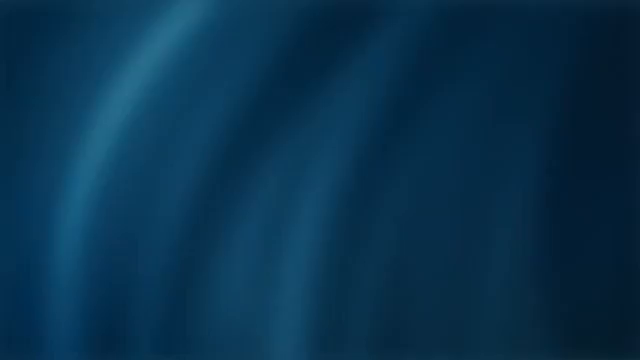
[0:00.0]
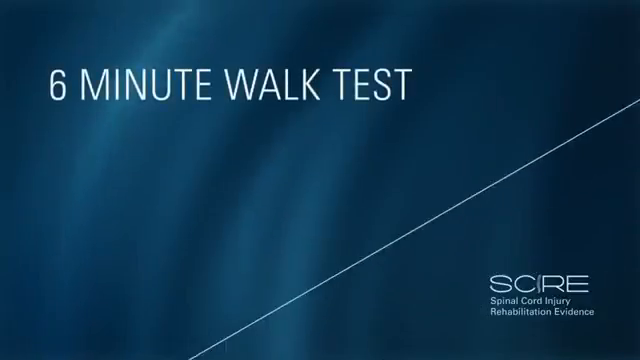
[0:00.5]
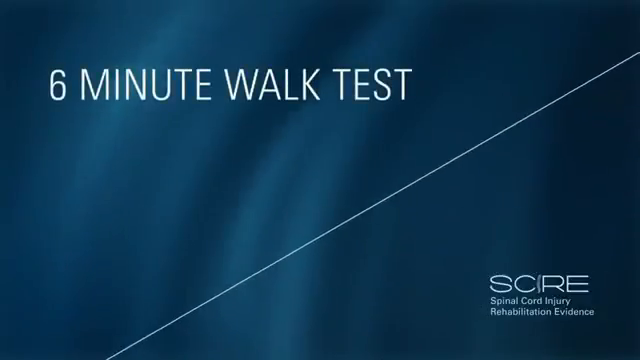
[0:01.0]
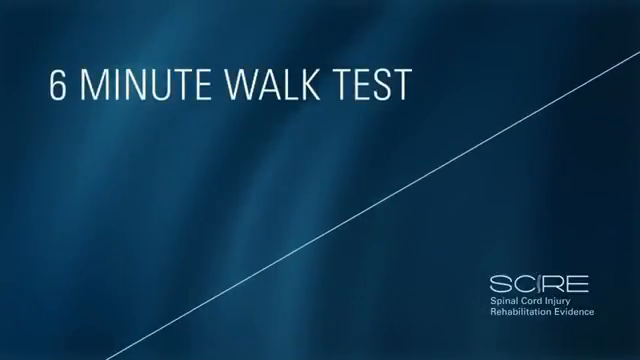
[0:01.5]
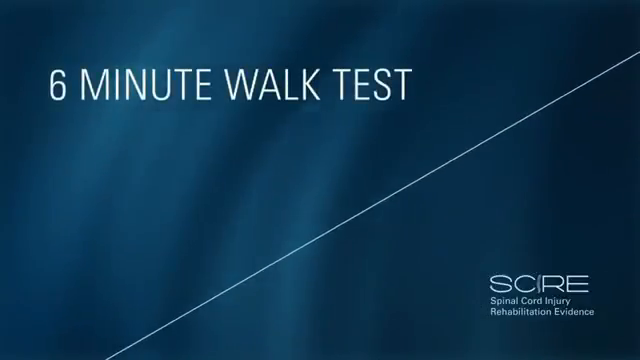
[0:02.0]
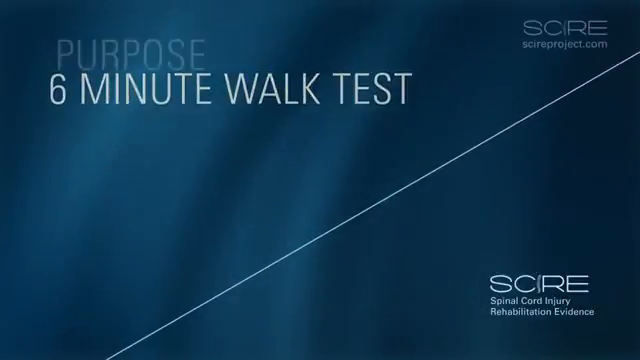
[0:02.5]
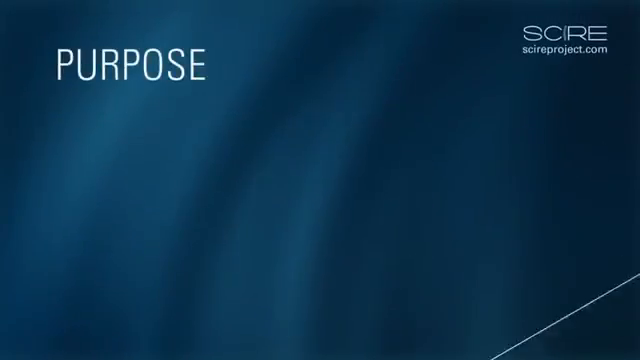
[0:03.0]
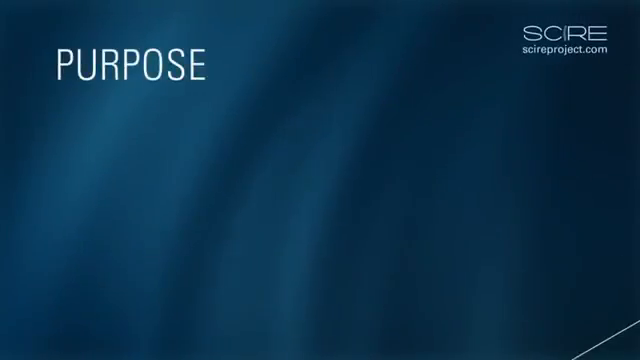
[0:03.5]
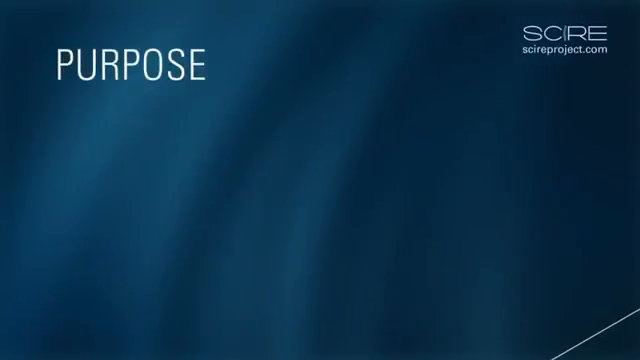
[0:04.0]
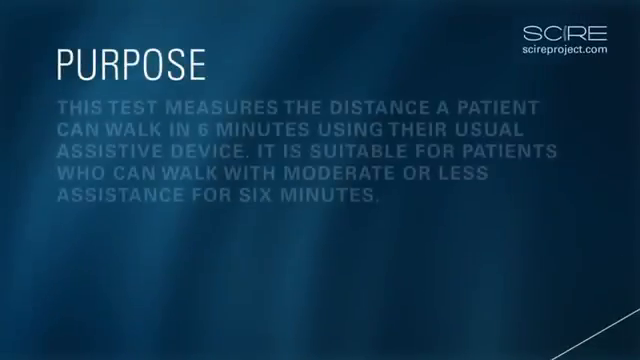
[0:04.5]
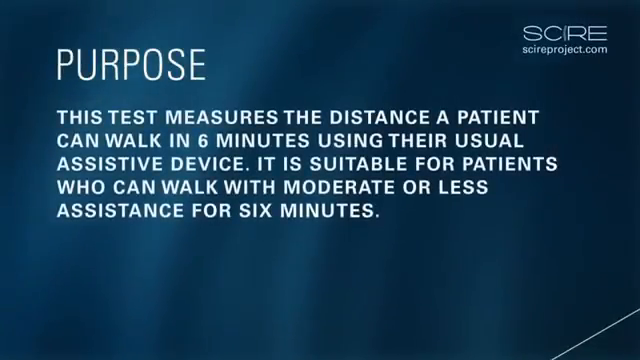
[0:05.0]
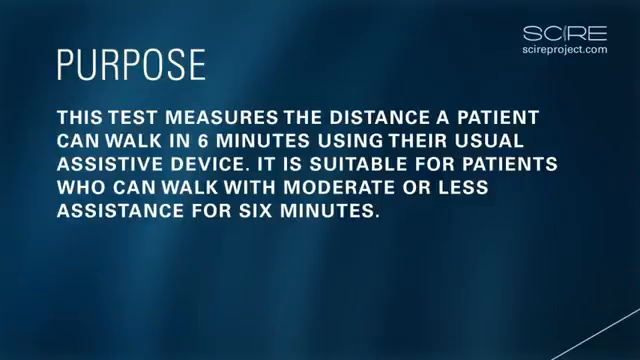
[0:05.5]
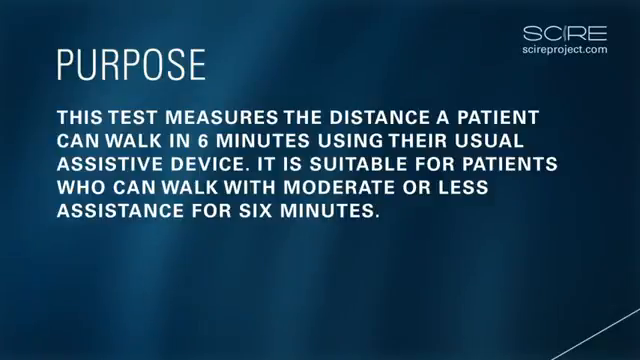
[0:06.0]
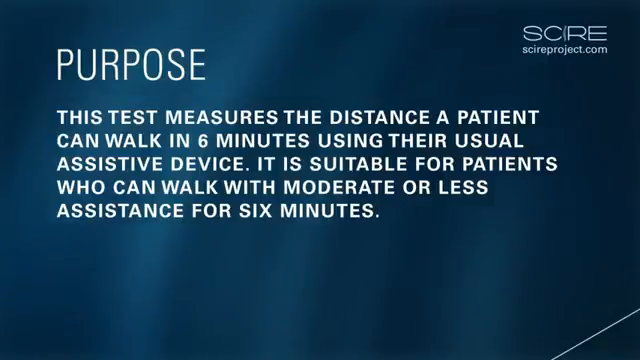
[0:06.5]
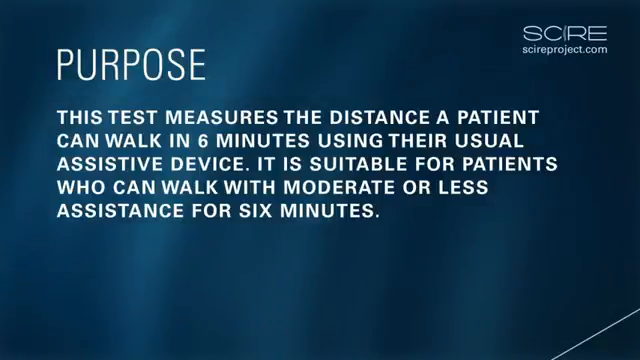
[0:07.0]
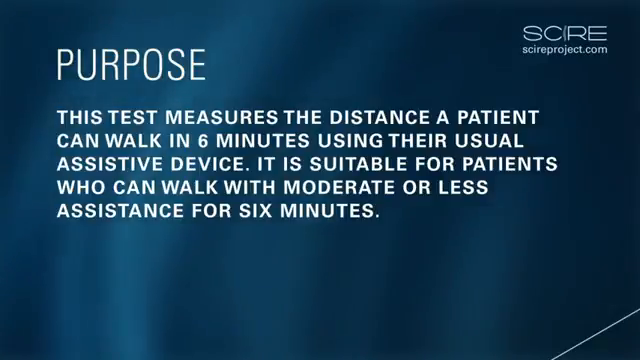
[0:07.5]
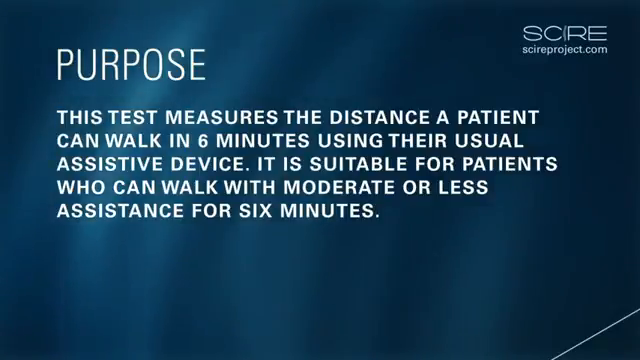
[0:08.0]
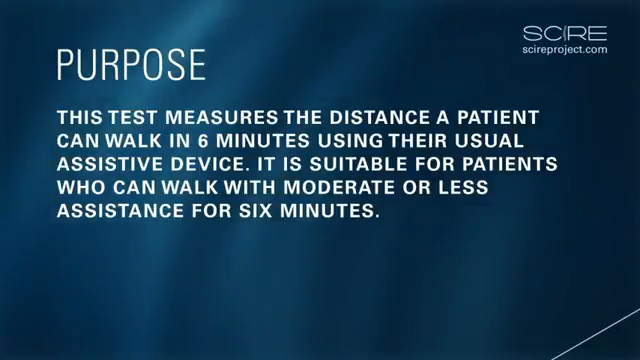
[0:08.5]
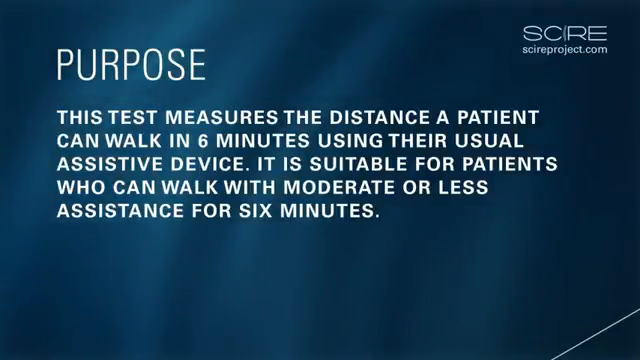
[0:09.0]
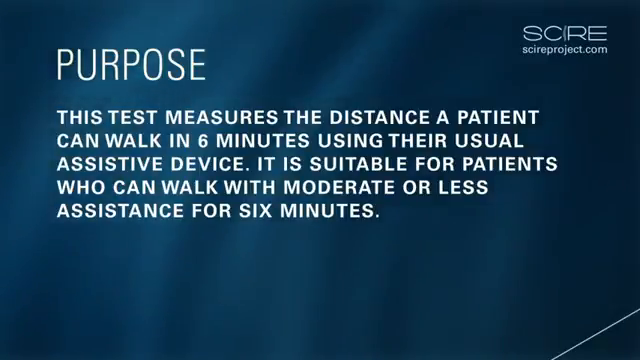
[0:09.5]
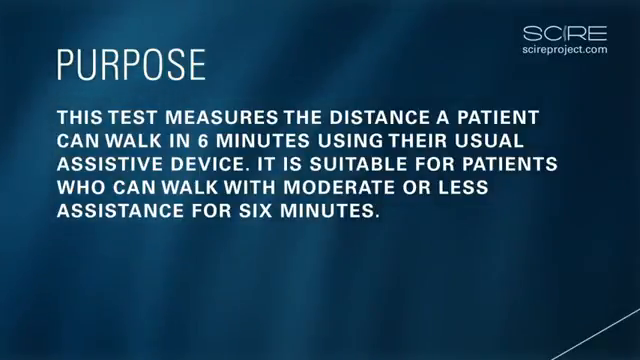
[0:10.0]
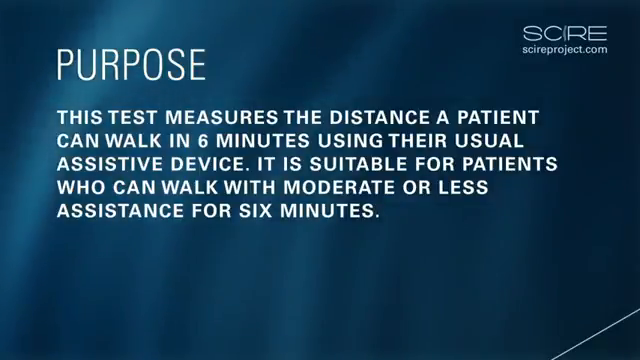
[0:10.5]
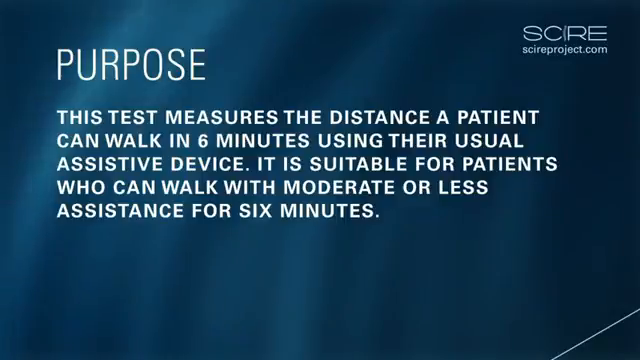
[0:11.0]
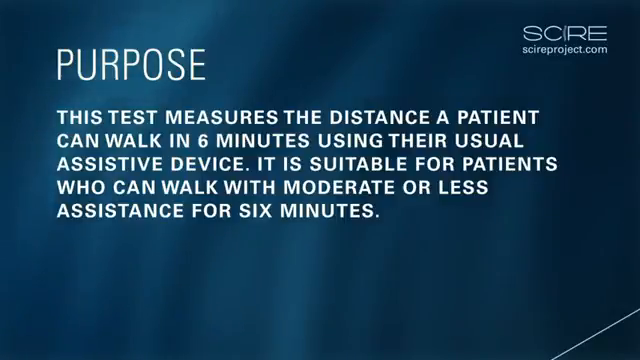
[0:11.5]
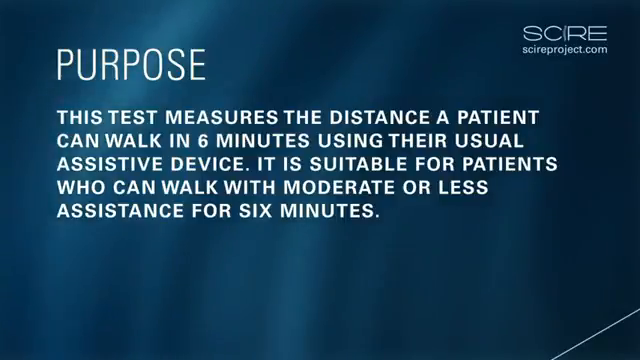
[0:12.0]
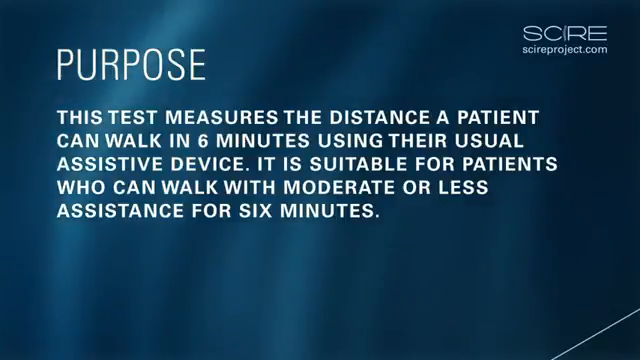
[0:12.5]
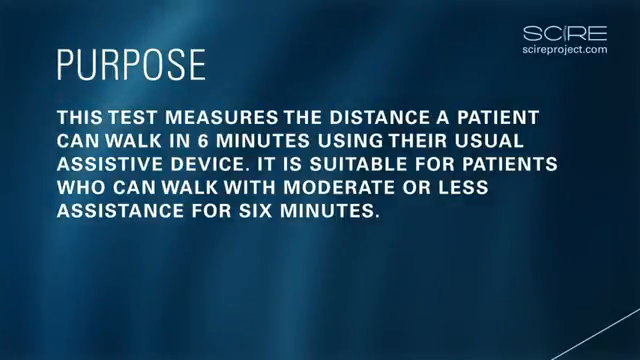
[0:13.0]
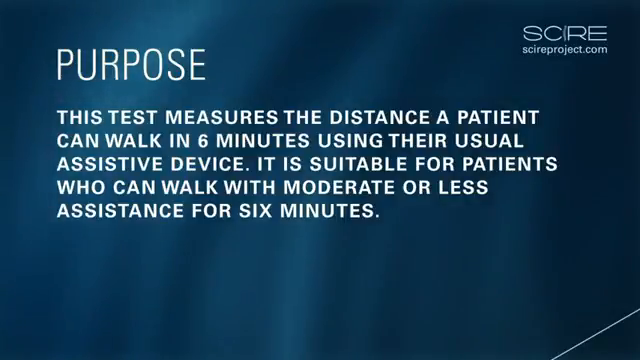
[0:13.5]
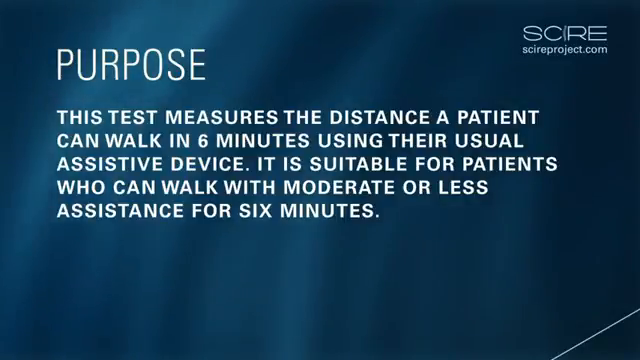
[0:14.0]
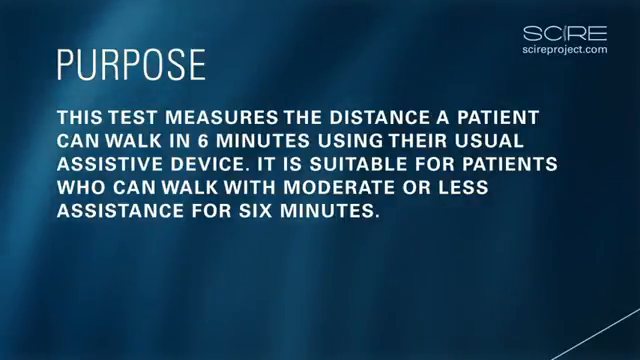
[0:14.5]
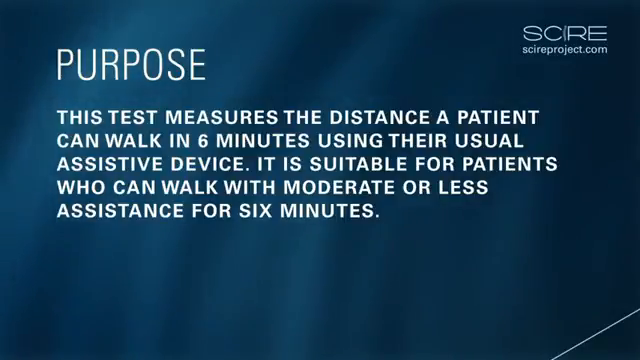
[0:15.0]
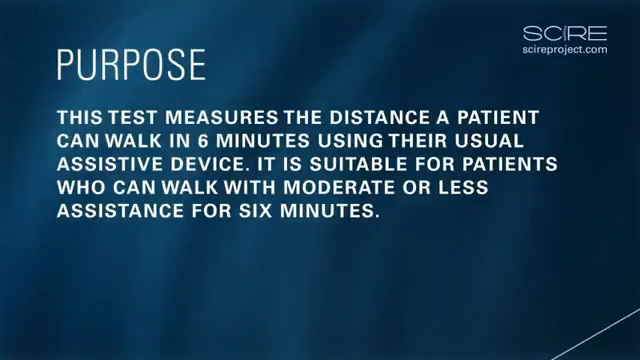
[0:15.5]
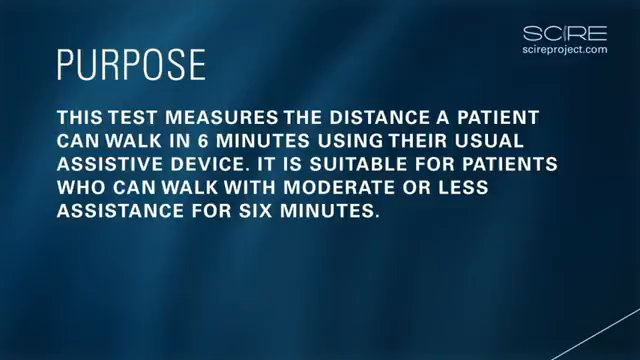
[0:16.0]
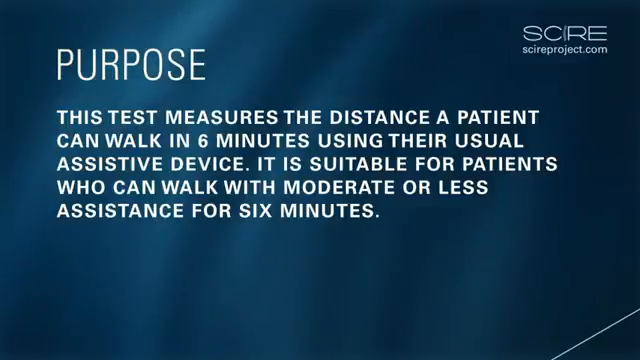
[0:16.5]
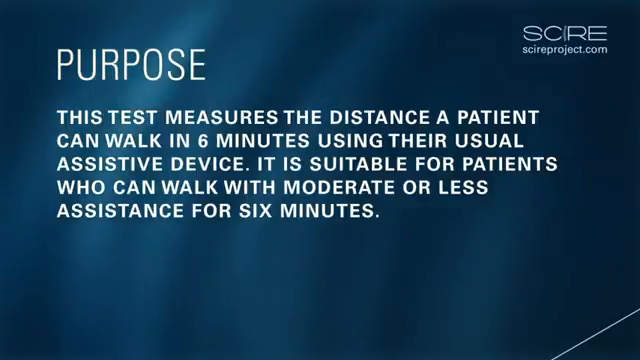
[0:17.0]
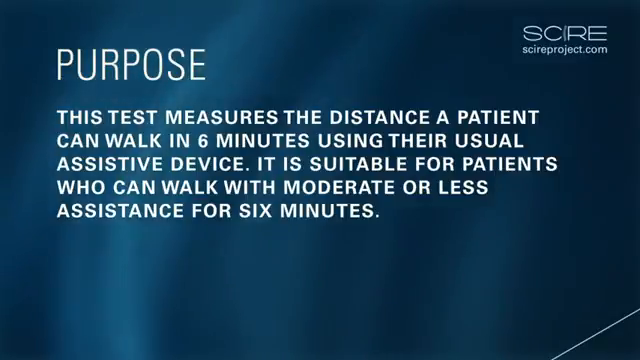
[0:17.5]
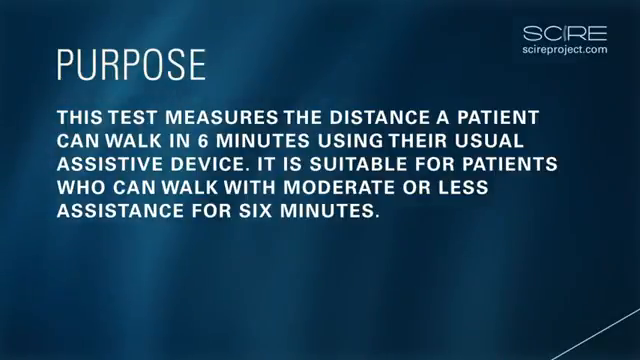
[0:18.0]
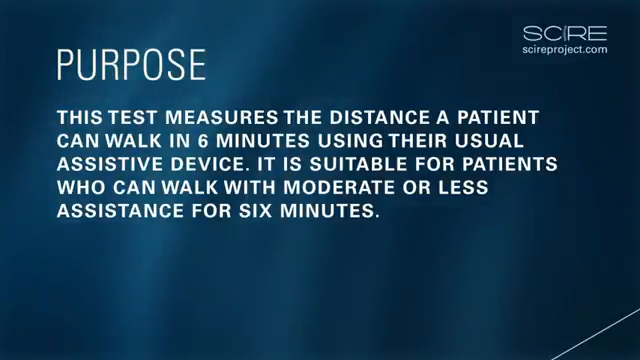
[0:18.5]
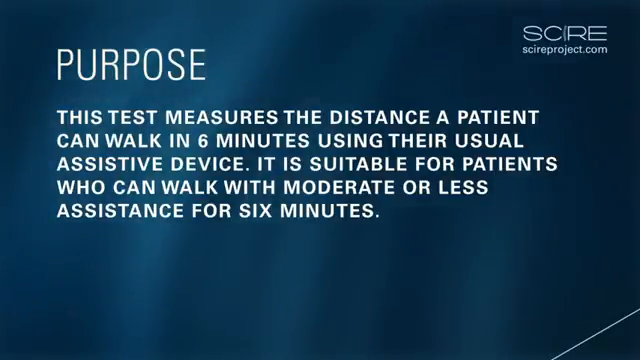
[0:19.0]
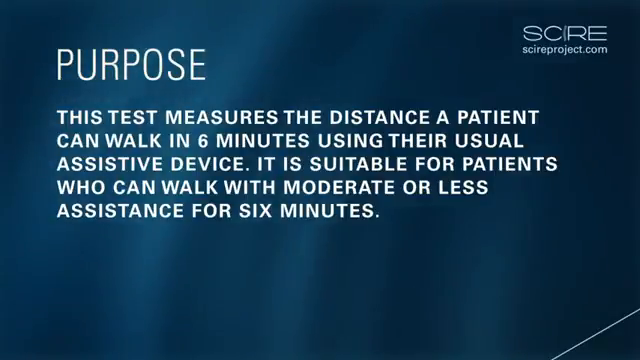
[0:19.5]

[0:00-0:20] The video opens on a dark blue background with a lighter blue area on the left side in a vertical, slightly curved pattern. Text appears at the top of the screen reading "6 minute walk test", and a diagonal line runs from the bottom left to the top right of the screen. Text then appears reading "purpose", followed by "This test measures the distance a patient can walk in 6 minutes using their usual assistive device. It is suitable for patients who can walk with moderate or less assistance for 6 minutes." This stays on screen for around 10 seconds. In the top right corner is a company logo reading "S.C.R.E", with the website "scireproject.com" listed underneath it.